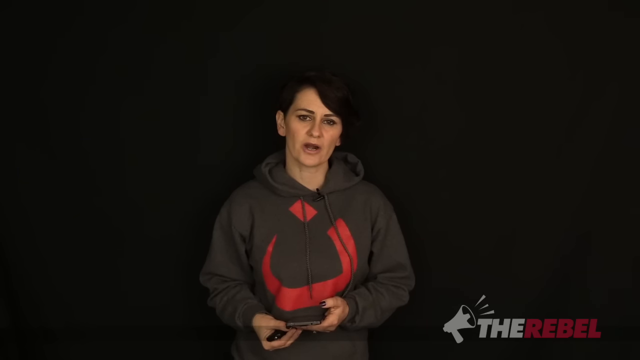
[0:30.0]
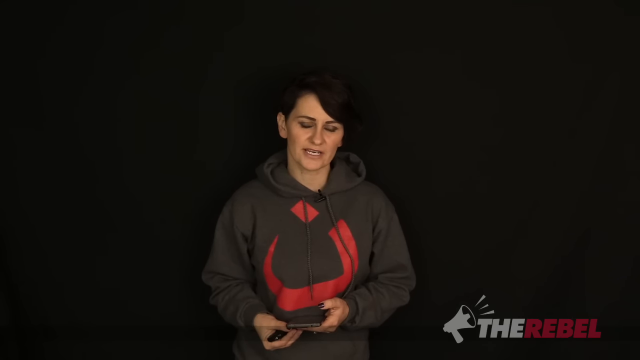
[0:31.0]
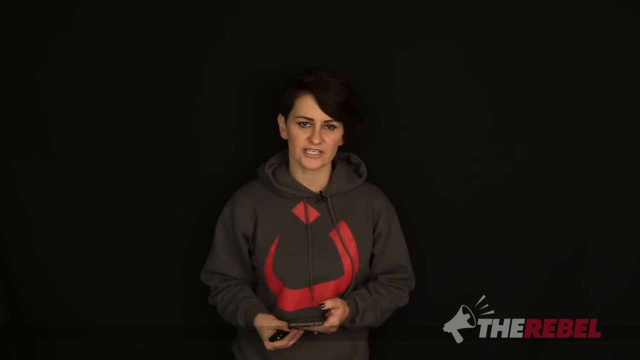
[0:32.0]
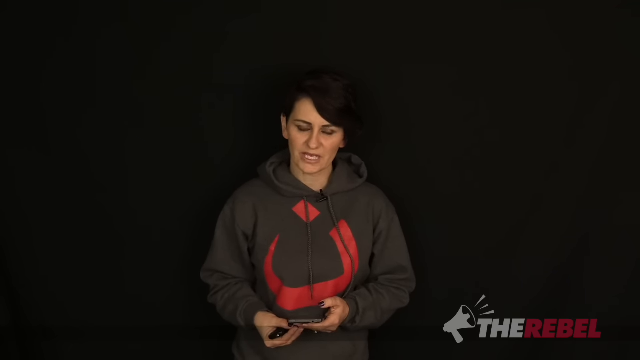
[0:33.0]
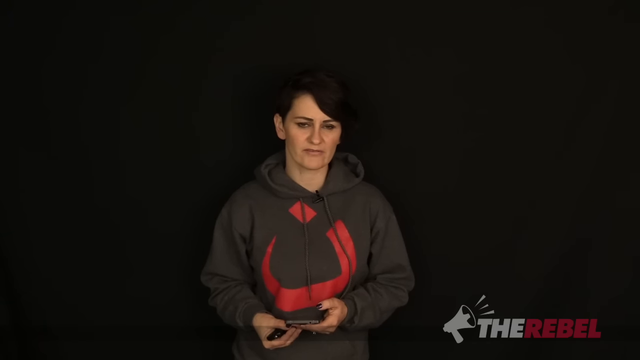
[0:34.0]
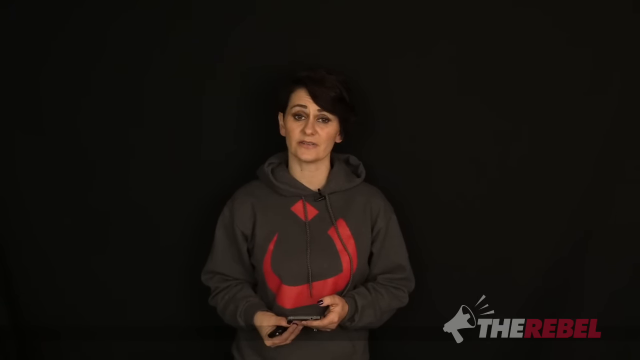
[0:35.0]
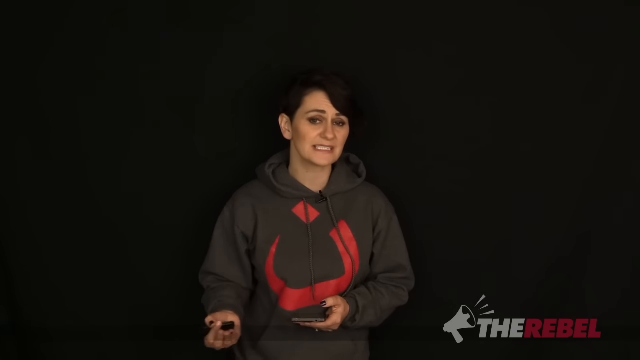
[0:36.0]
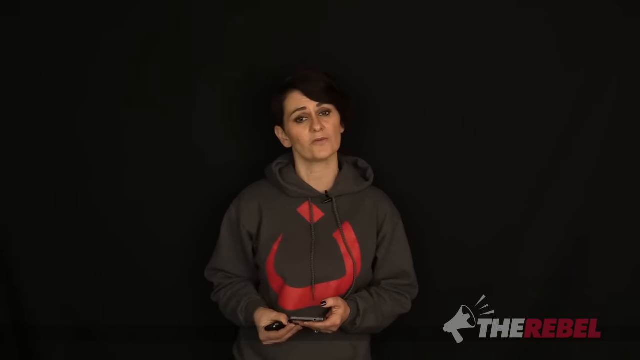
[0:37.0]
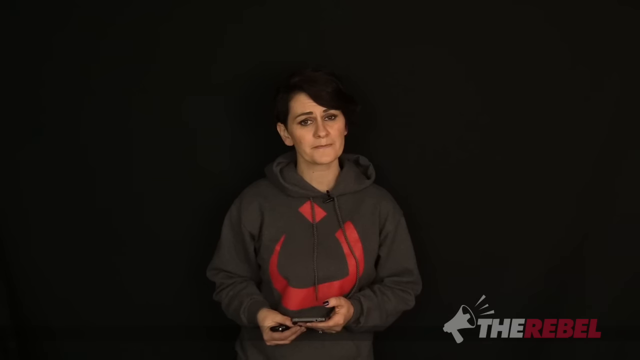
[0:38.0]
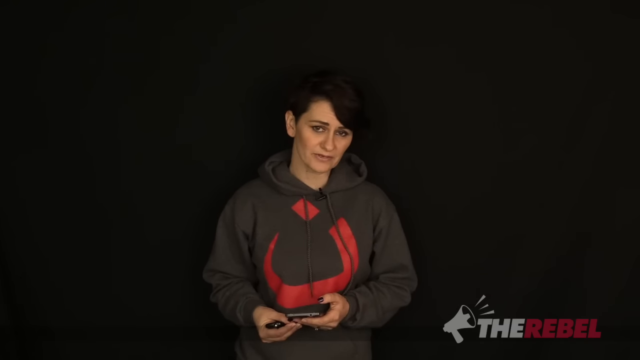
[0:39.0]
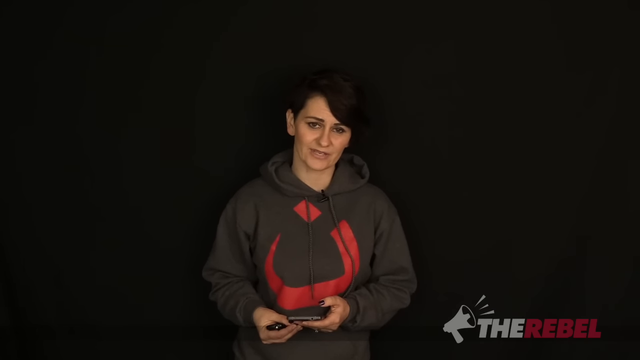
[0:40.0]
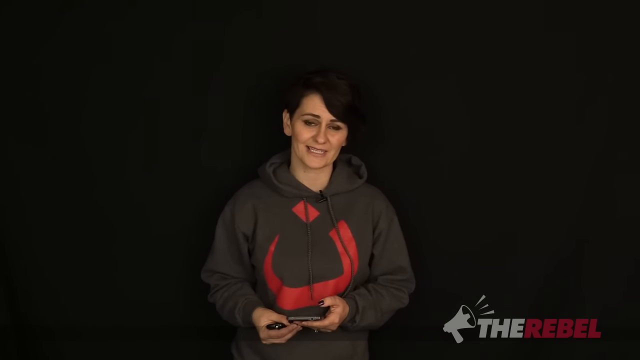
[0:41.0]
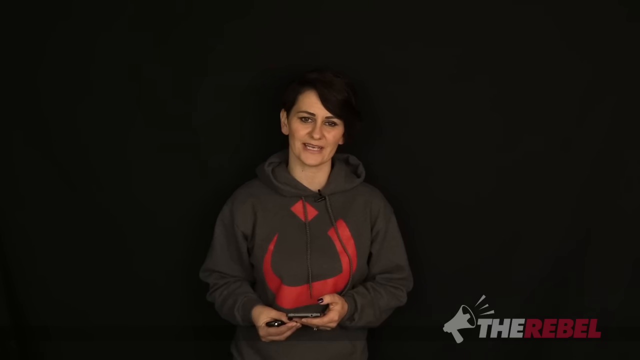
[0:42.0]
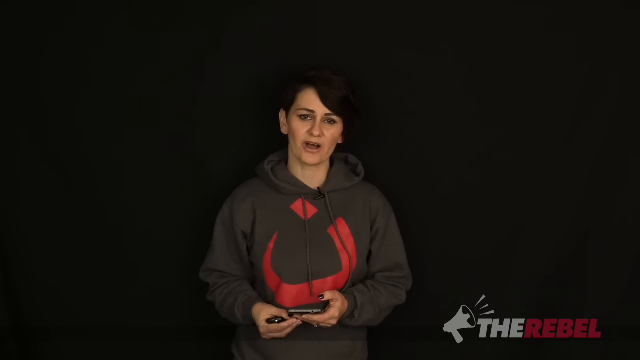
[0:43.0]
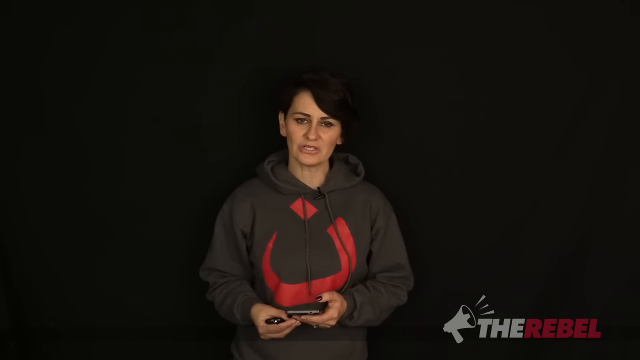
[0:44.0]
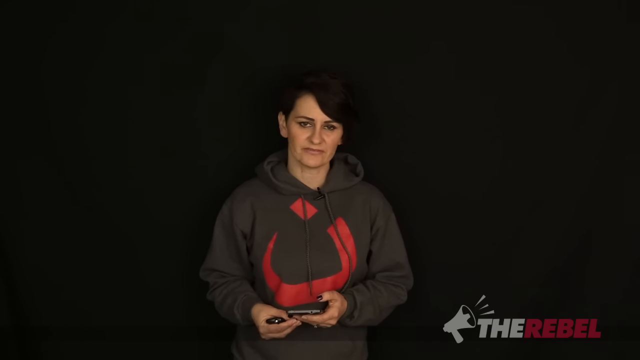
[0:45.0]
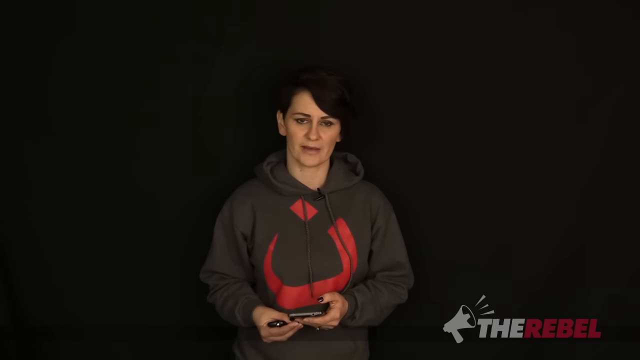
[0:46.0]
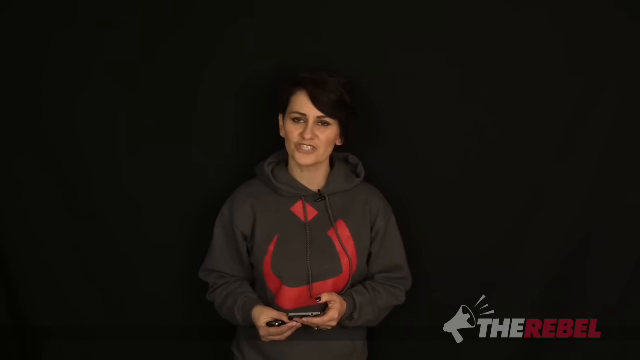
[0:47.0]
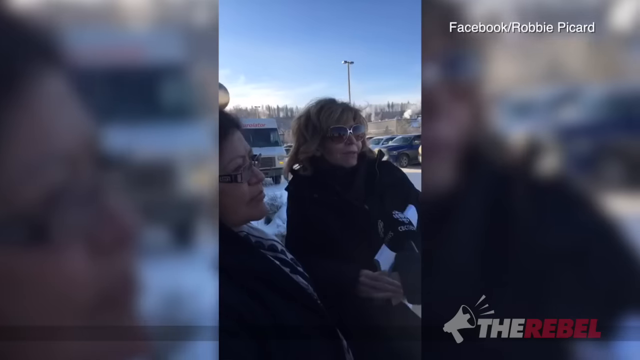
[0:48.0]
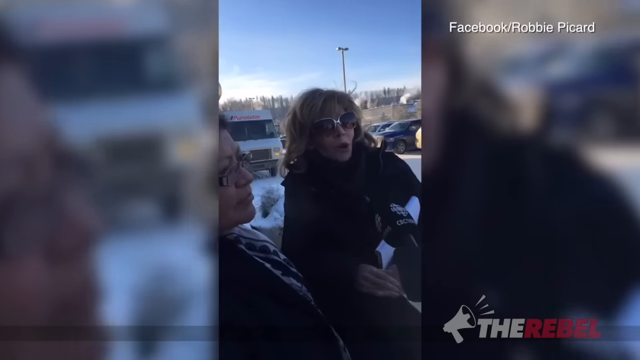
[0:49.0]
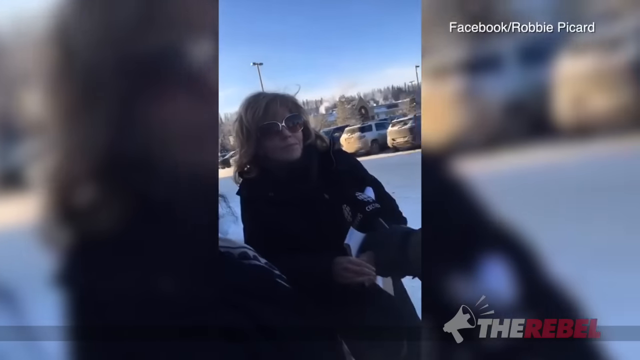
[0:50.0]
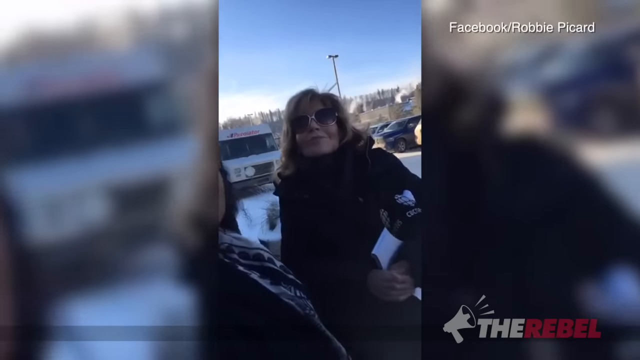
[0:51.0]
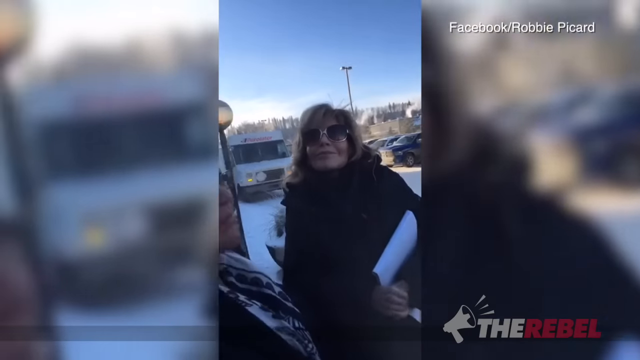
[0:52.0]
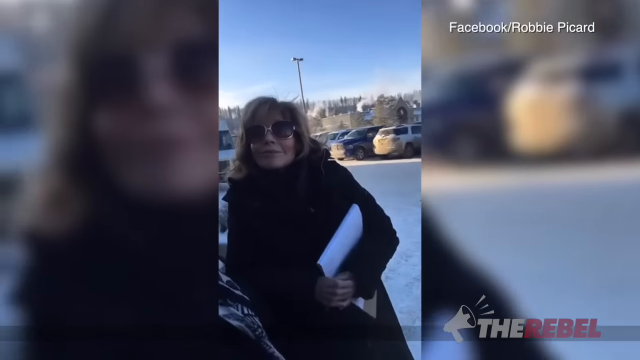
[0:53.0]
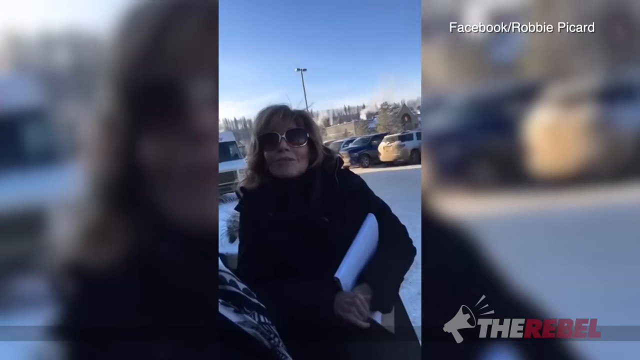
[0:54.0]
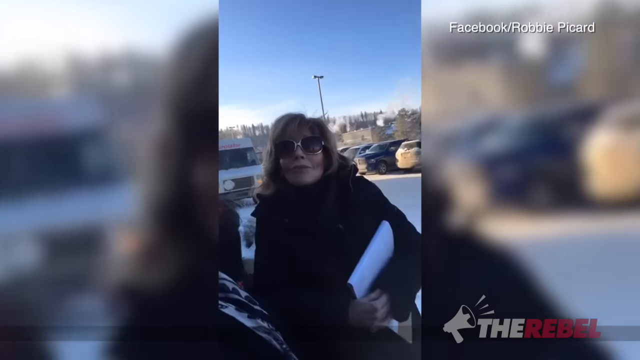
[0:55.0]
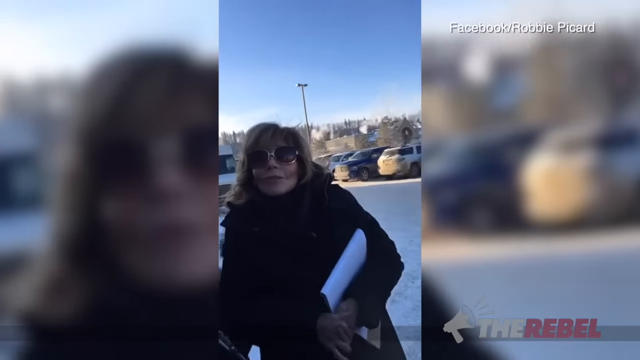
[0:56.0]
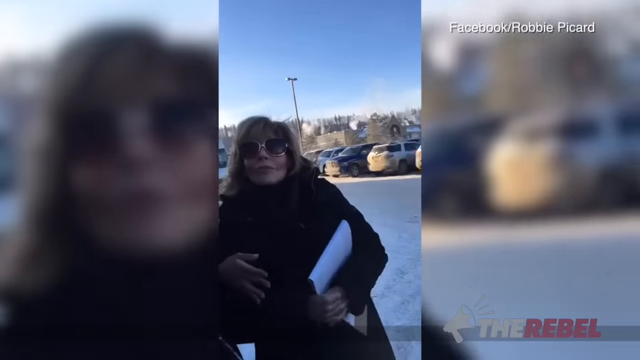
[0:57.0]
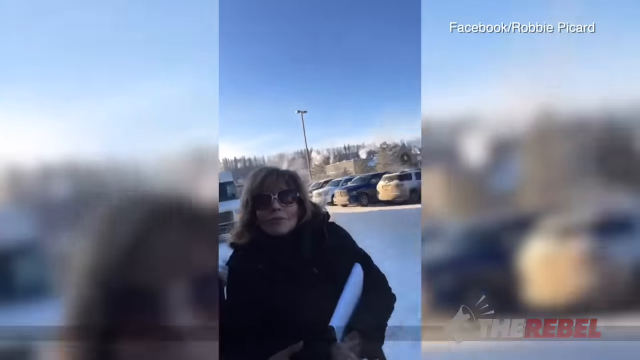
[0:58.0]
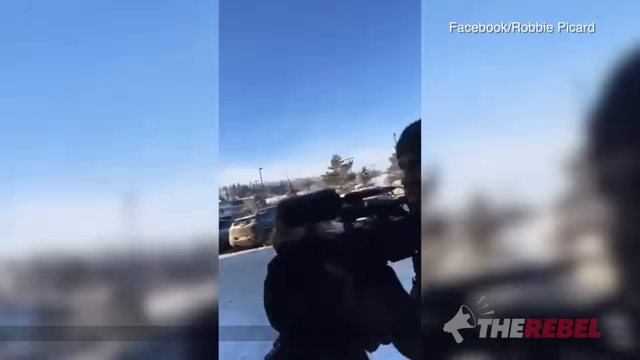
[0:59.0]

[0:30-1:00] The news anchor continues looking toward the camera, occasionally moving her right hand. She seems to be wearing black nail polish and some kind of earring in her left ear. A video of a couple of women talking is then shown; text in the upper right corner indicates it is taken from Facebook, specifically the Facebook of Robbie Picard. The video is vertical, as if shot on a phone held upright. Both women seem to be about 50 to 60 years old; one wears sunglasses and the other wears normal glasses, and they are talking toward a microphone. The setting seems to be a cold place, and in the background there appear to be other people and what seems to be a camera crew.